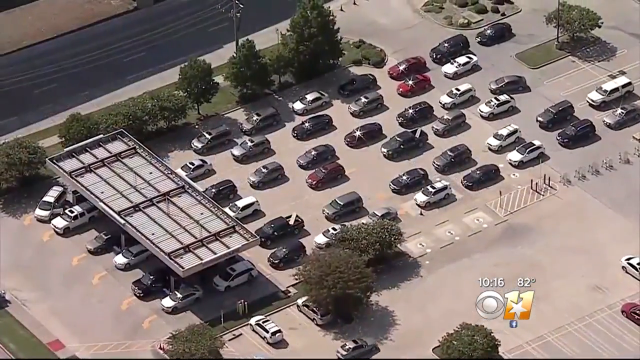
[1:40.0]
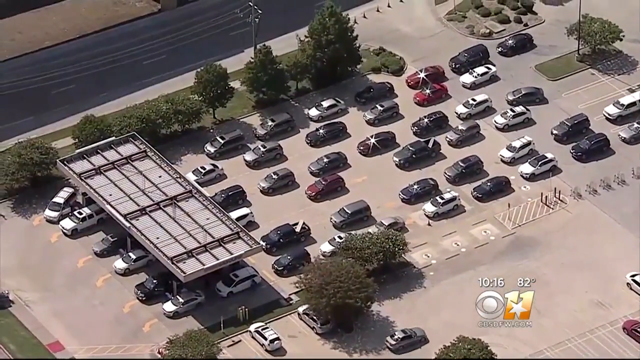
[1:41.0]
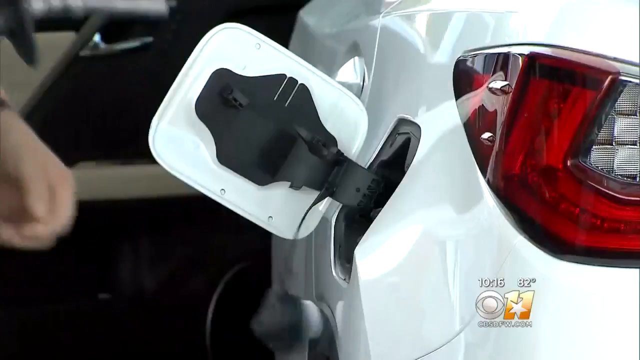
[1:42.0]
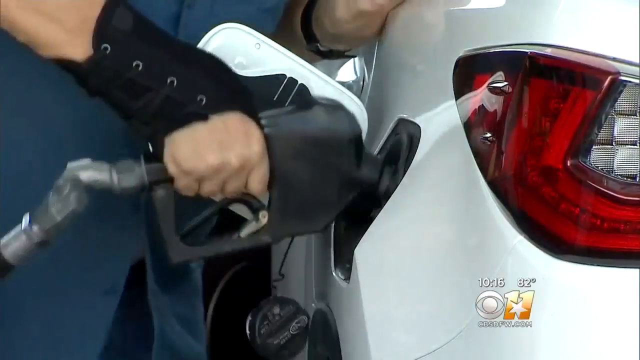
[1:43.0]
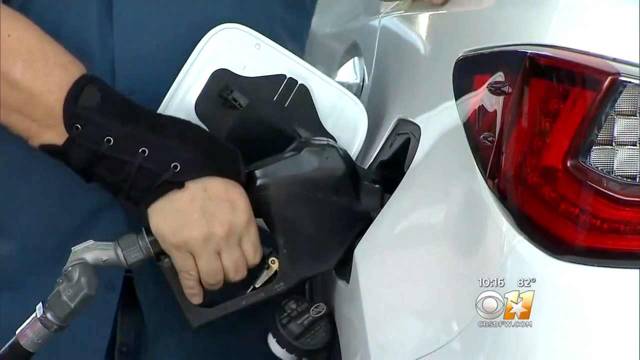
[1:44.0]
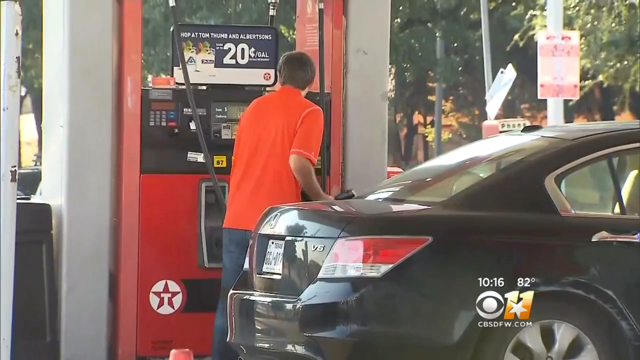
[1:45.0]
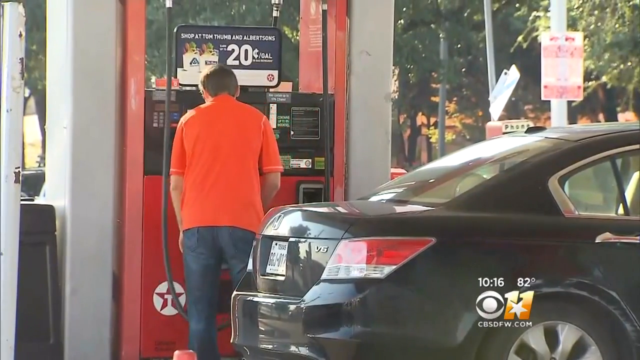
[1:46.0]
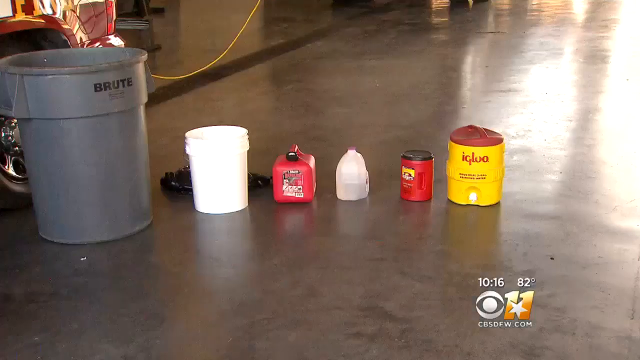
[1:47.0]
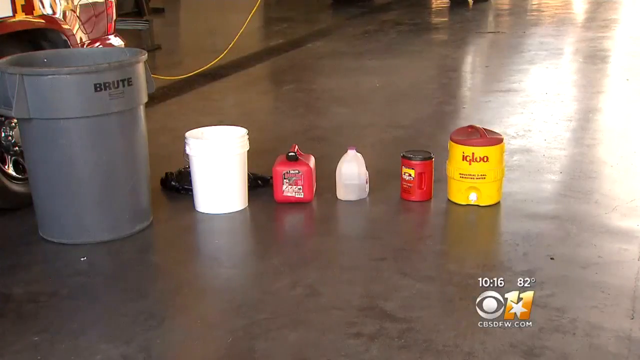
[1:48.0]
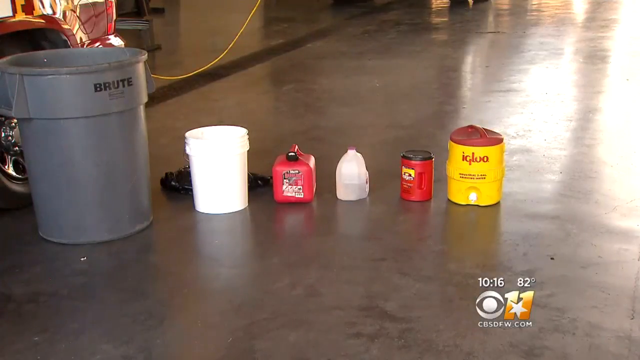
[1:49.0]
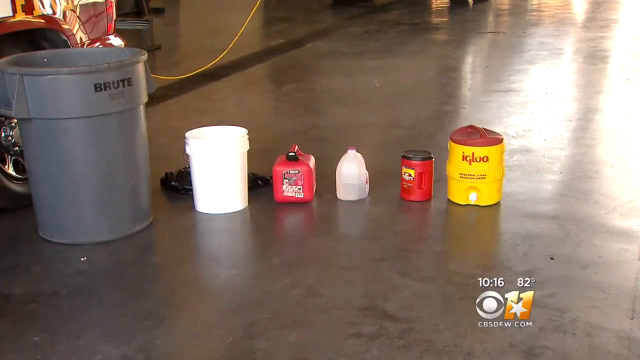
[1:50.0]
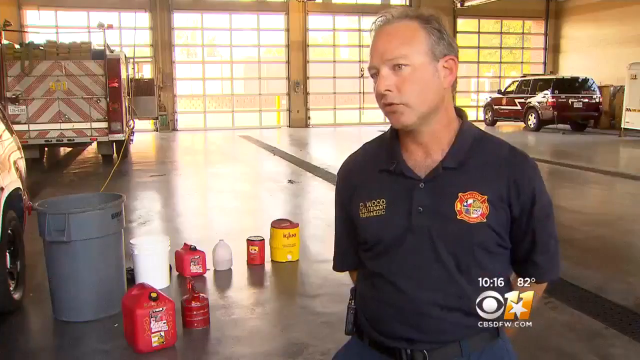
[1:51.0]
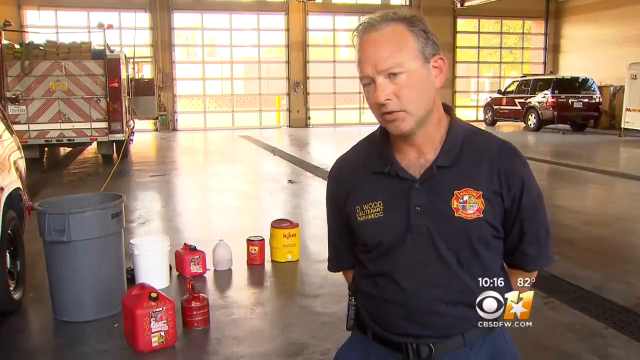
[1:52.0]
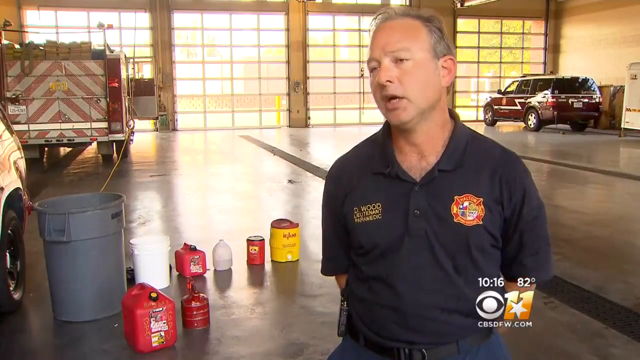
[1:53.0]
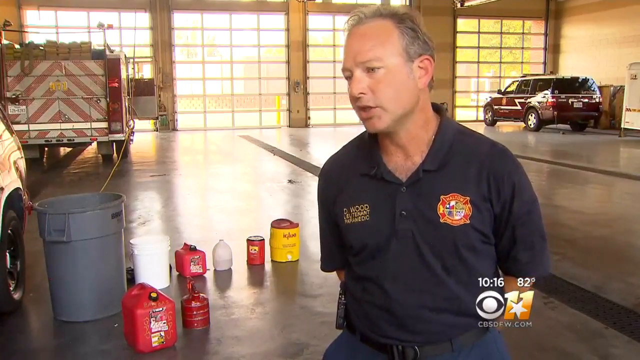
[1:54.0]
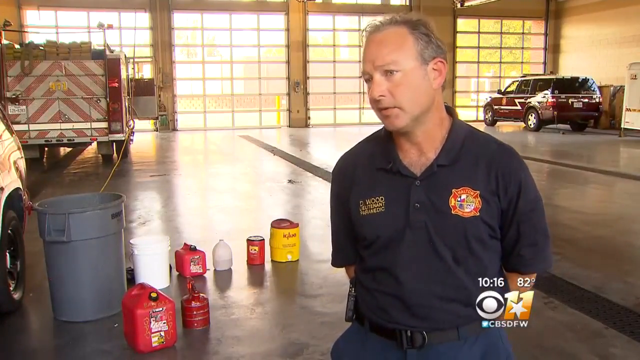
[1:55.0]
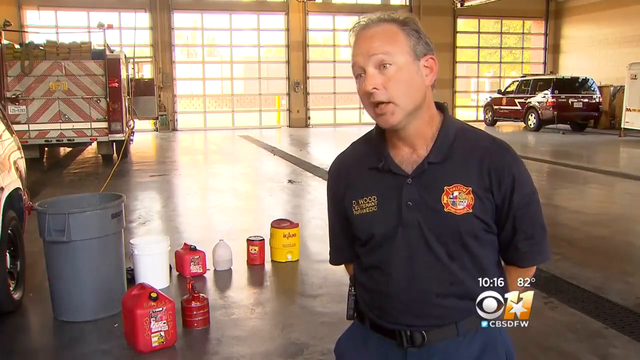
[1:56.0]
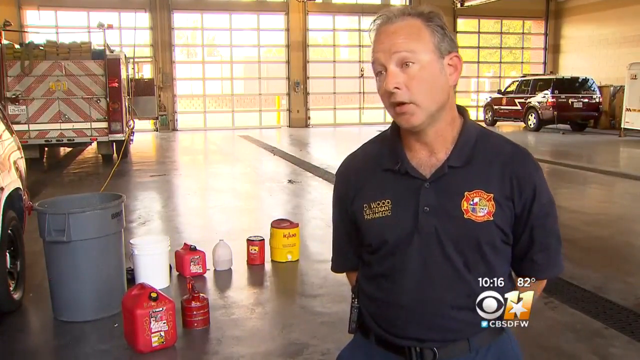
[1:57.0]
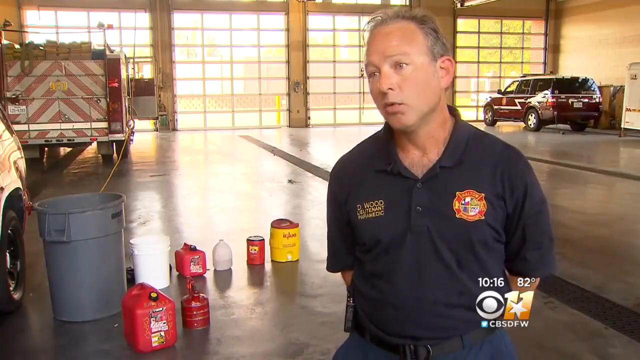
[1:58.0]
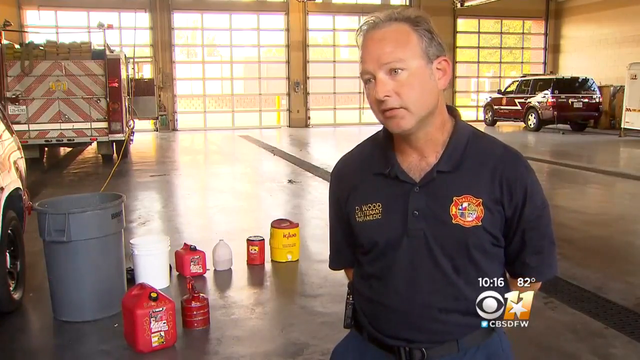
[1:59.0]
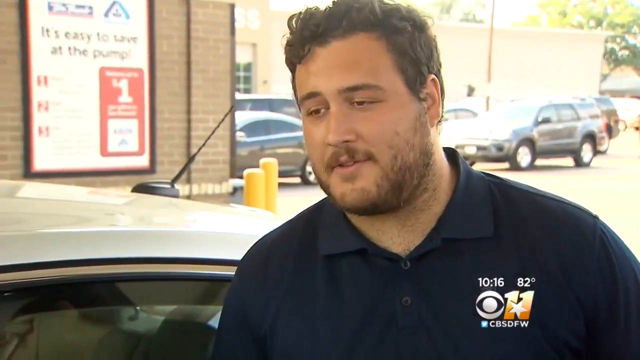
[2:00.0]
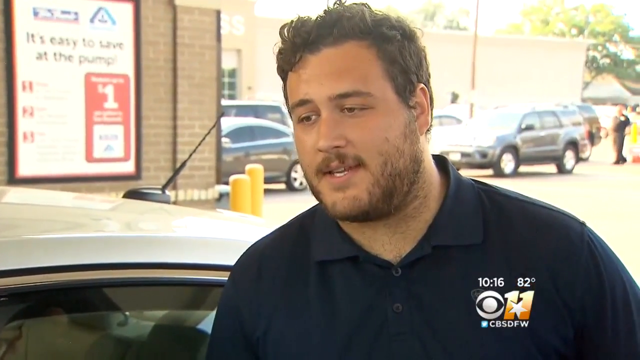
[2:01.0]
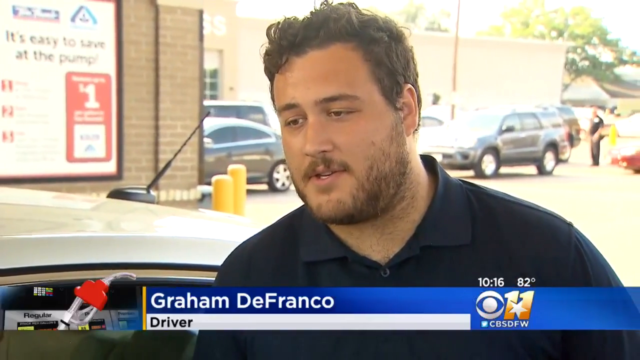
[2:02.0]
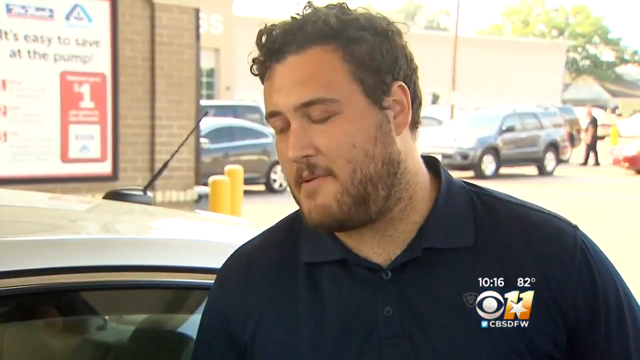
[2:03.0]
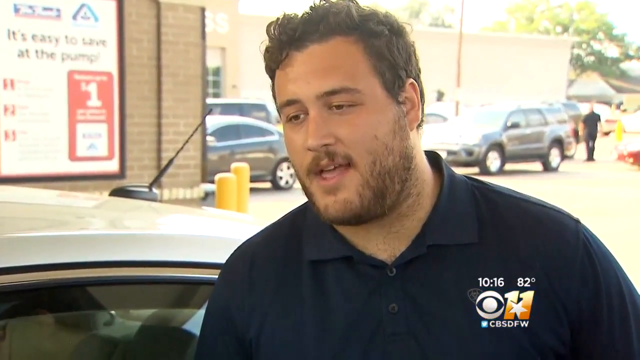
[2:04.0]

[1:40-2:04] Aerial footage from above shows a long line of cars waiting to get gas at a gas station. Next, a man's hand pumps gas, sticking the gas pump into a light-colored vehicle. Another customer at a gas pump puts gas into a black Honda Accord. The scene then moves inside a fire station, where six things are lined up next to a firetruck: a big gray Rubbermaid trash can, next to it a white bucket, then a red container, a jug of water, a Folgers coffee container, and to the right of that a yellow and red Igloo water container. A middle-aged white man in a fire department polo speaks to the camera in front of all these items with his arms behind his back. Finally, a customer at a gas station speaks to the camera.